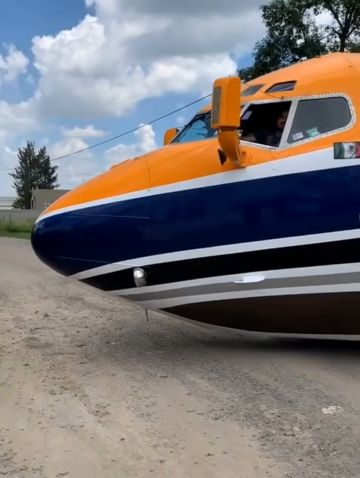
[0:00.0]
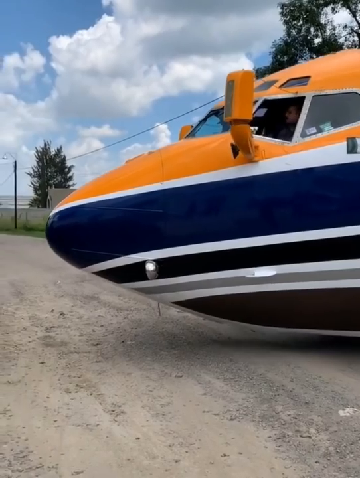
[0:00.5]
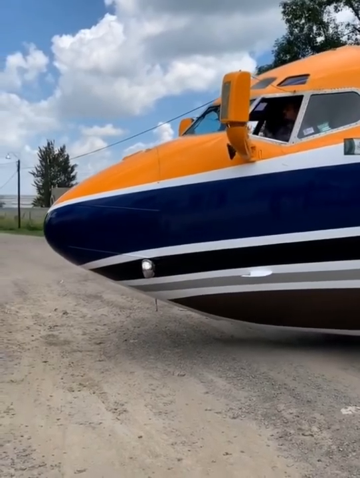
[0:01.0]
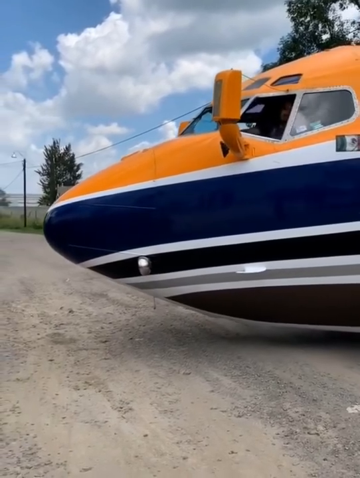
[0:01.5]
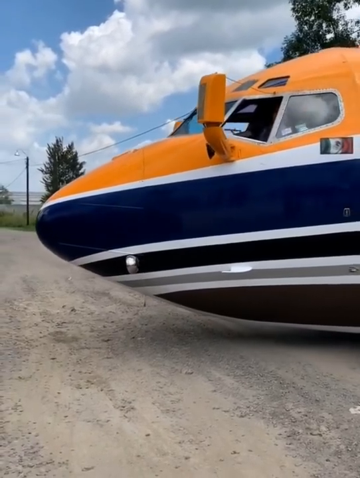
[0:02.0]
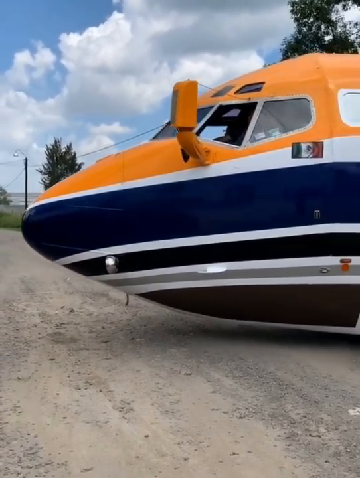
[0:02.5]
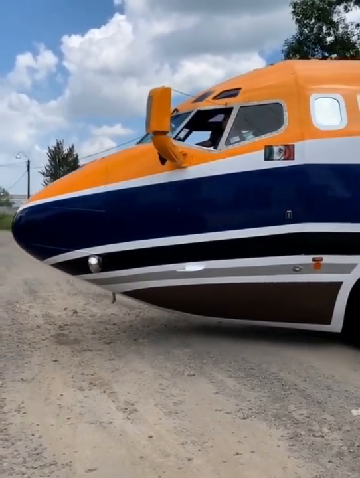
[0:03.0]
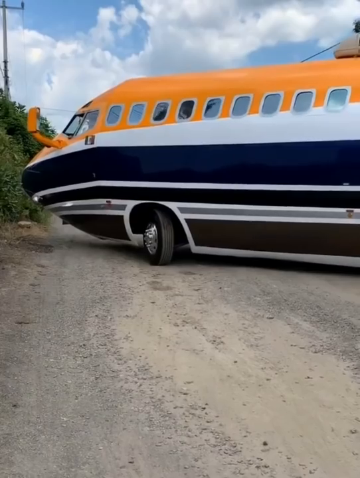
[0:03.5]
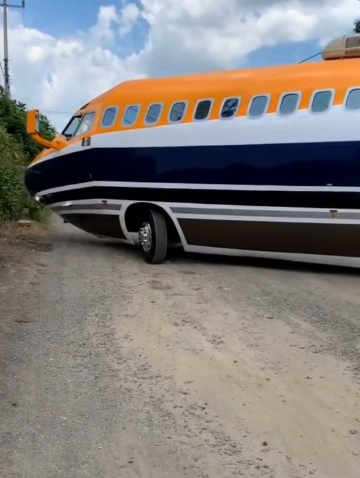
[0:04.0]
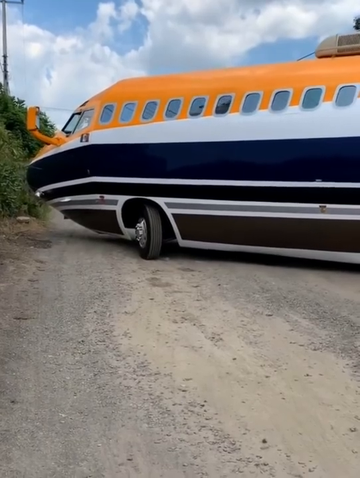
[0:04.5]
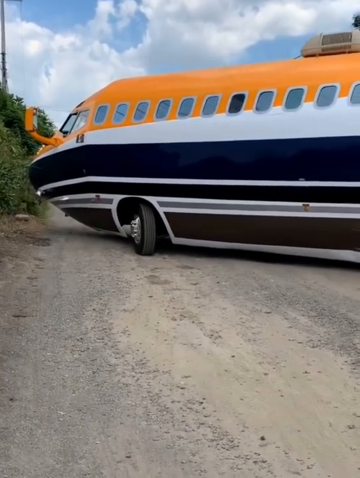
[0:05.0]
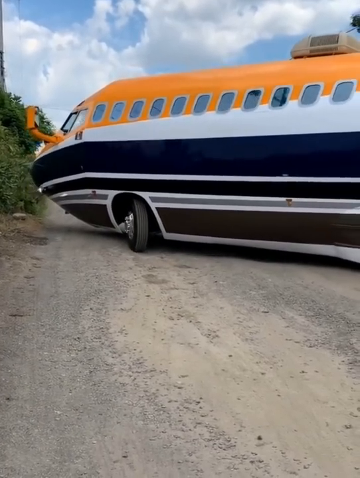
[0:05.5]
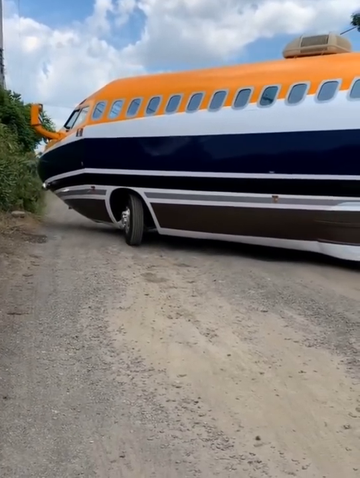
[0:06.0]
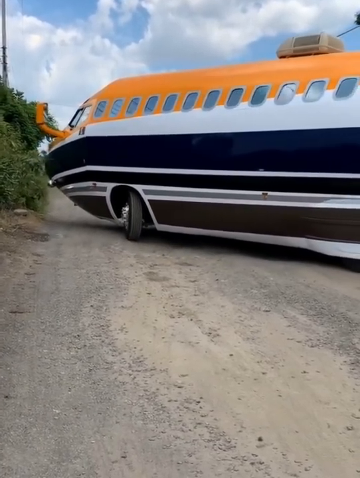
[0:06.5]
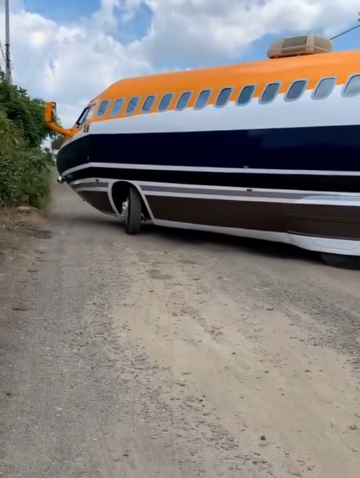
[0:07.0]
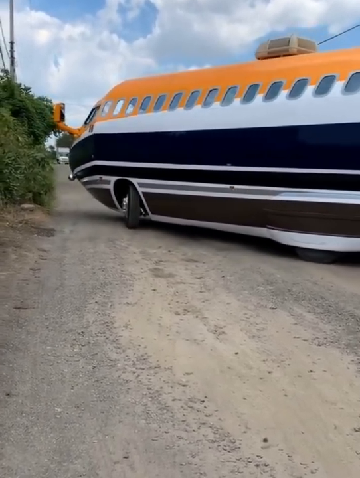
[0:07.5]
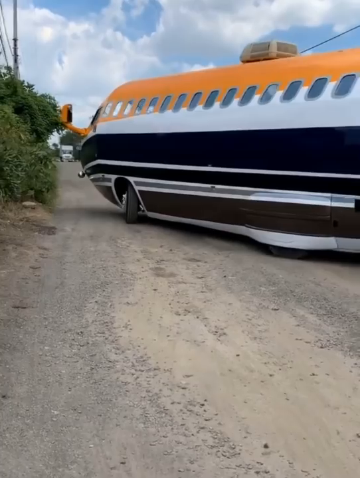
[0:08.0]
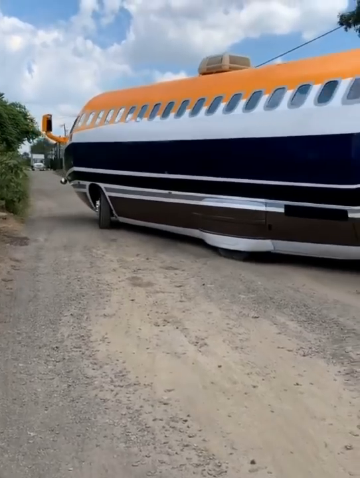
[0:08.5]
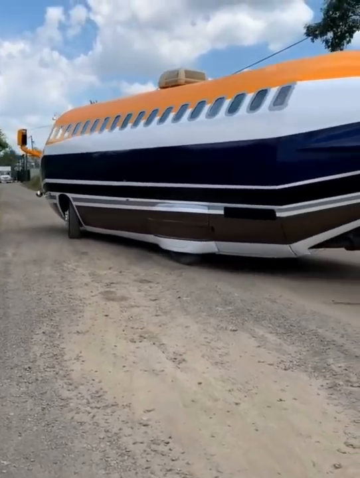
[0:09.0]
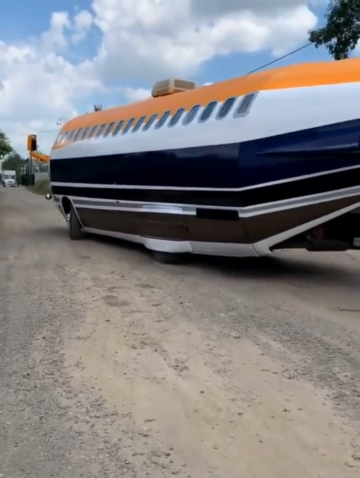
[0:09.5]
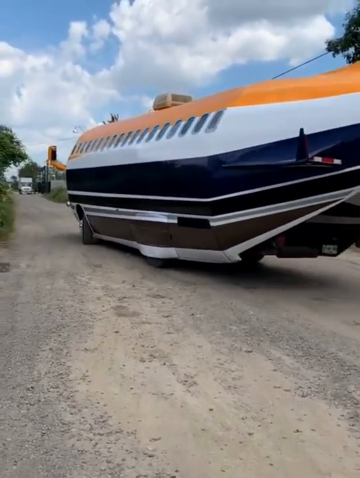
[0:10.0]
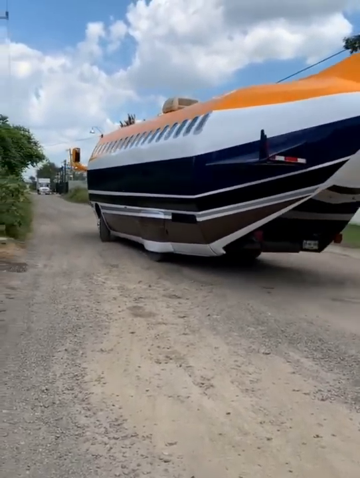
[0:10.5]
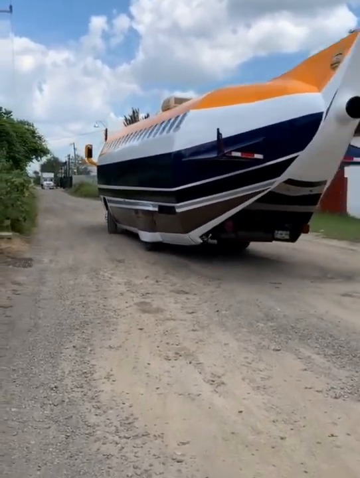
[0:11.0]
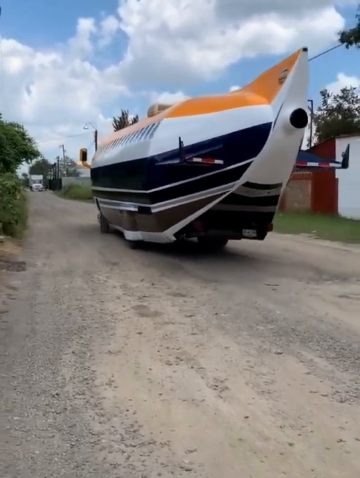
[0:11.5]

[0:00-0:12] The video is titled "This a Airplane or a Bus" and carries a logo that says "Ace". The thumbnail shows only a small nose of what appears to be a boat or a plane; the bus is not visible yet. Once the video plays, a yellow and blue airplane/bus appears. It is long like a plane and long like a bus: a bus in the shape of a plane, on tires. It struggles to take a right turn on a gravel road. There is an AC unit on the top, and it is a nice day outside. The mirrors on the left side stick out as far as a Greyhound bus's do. The vehicle looks like a bi-prop bus and has four wheels.